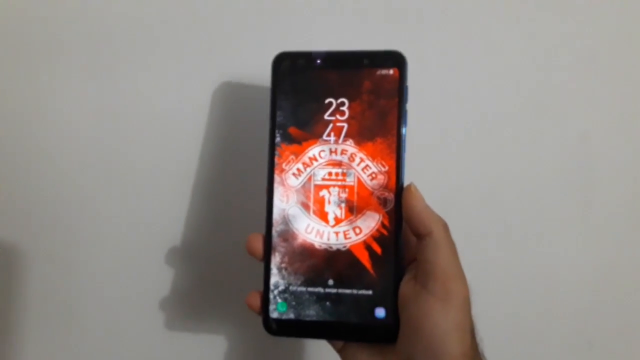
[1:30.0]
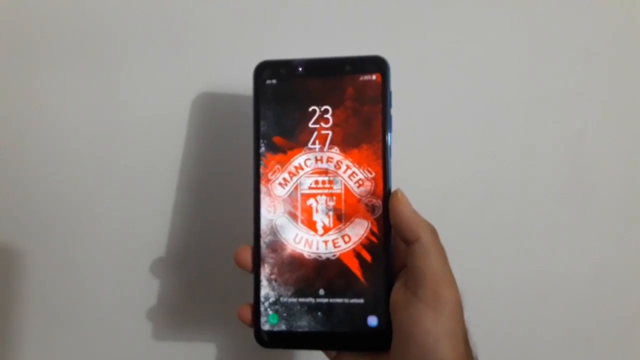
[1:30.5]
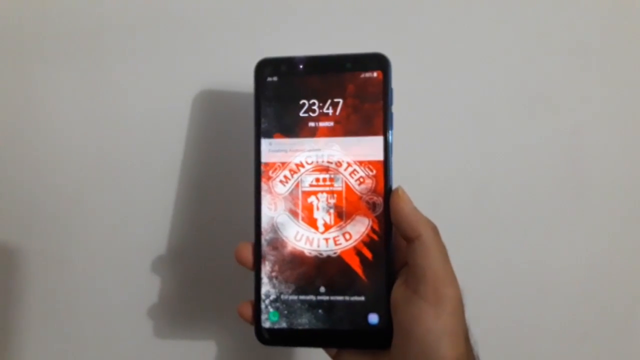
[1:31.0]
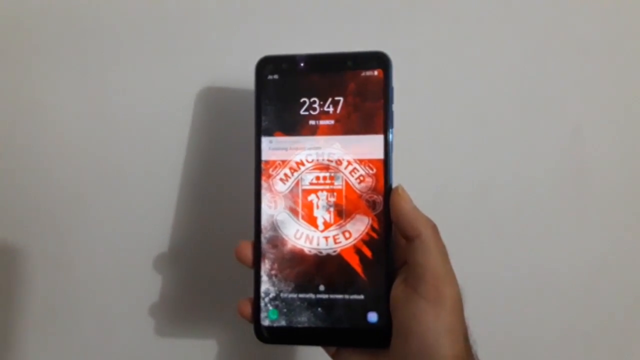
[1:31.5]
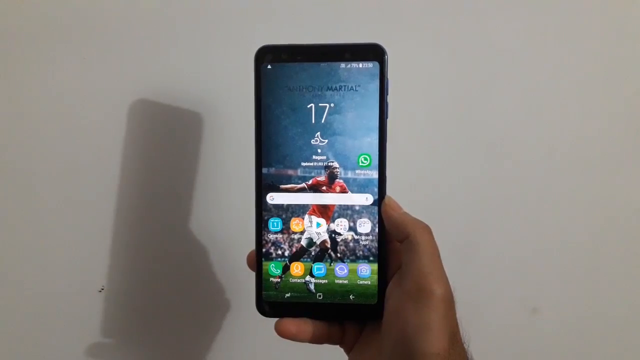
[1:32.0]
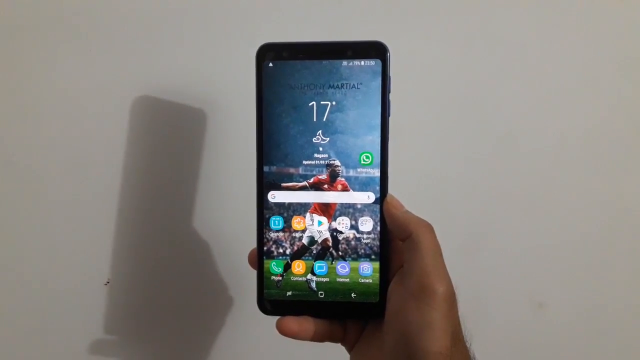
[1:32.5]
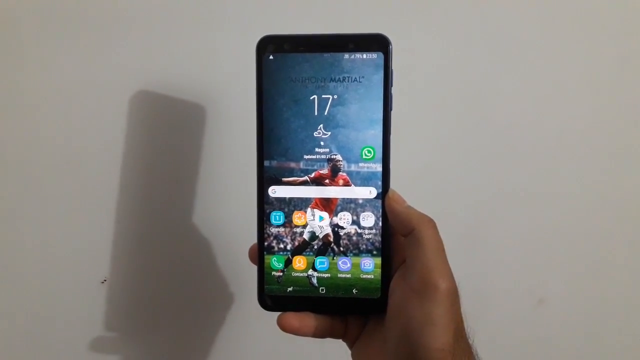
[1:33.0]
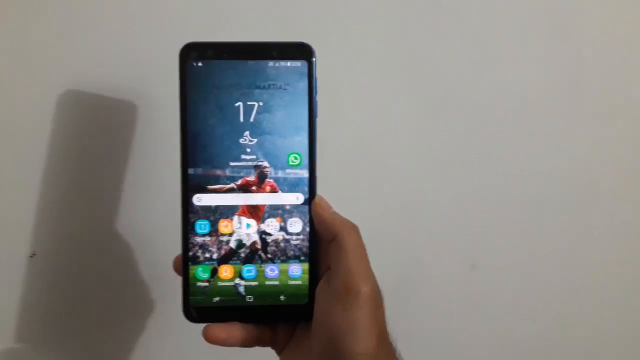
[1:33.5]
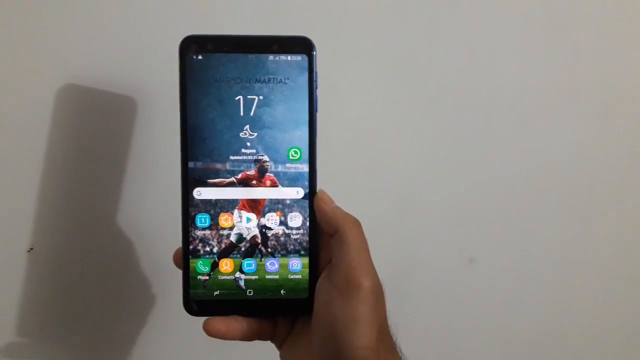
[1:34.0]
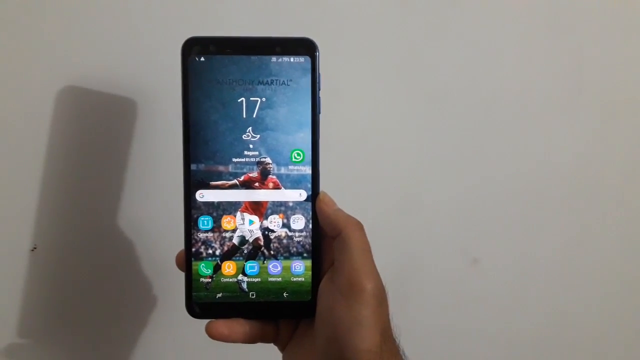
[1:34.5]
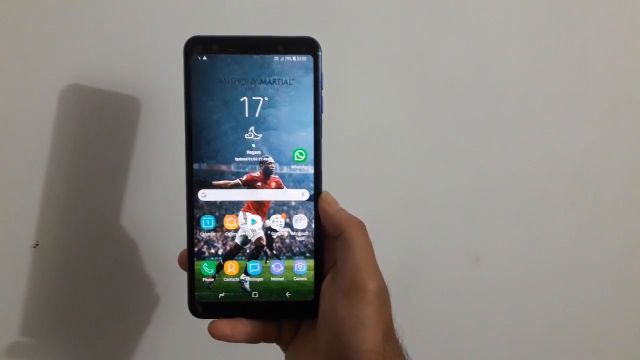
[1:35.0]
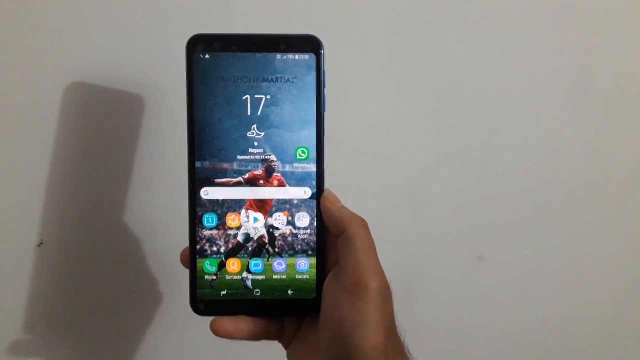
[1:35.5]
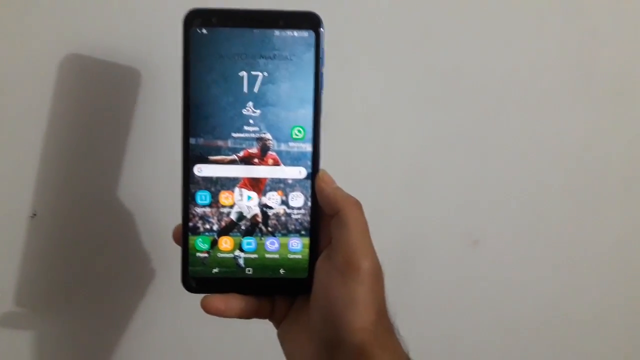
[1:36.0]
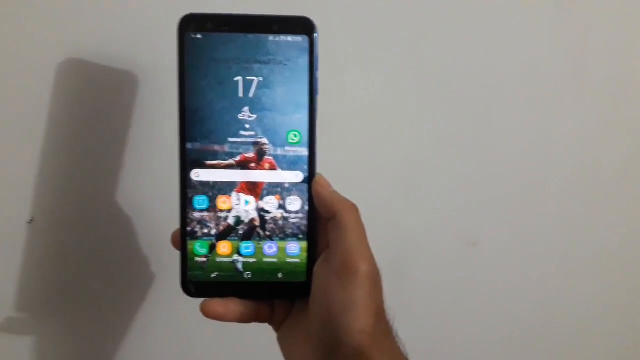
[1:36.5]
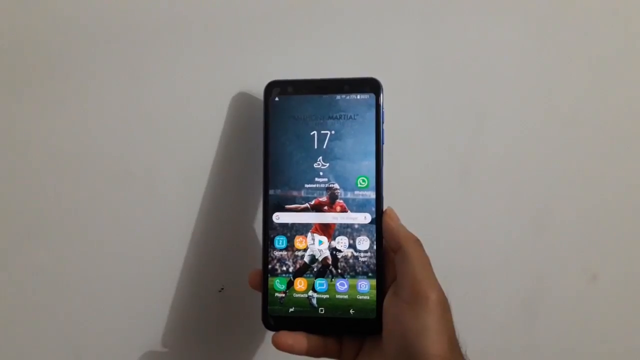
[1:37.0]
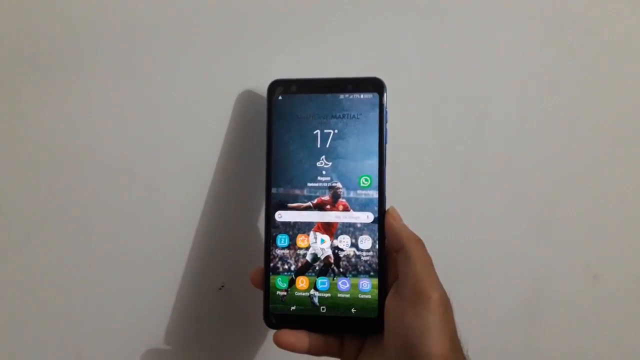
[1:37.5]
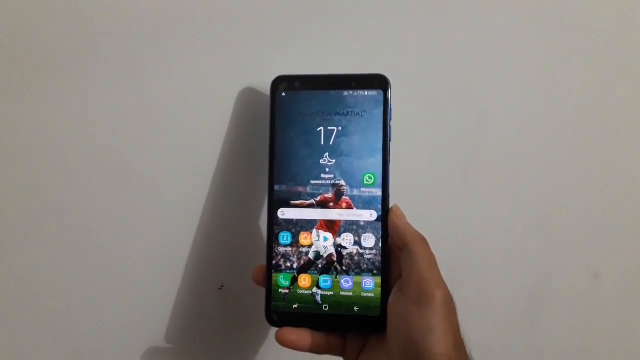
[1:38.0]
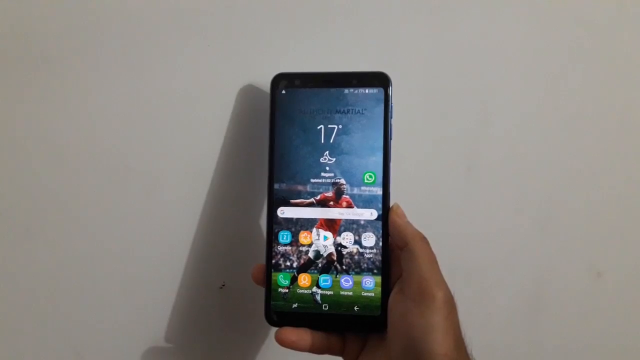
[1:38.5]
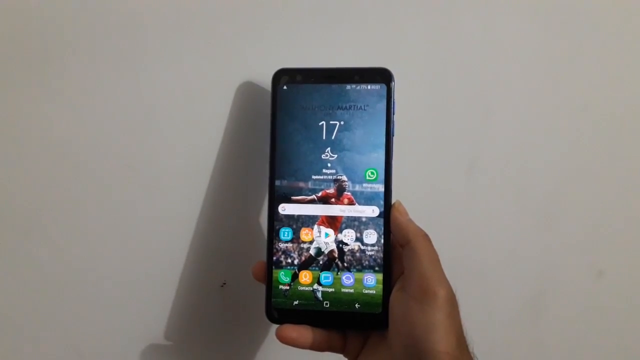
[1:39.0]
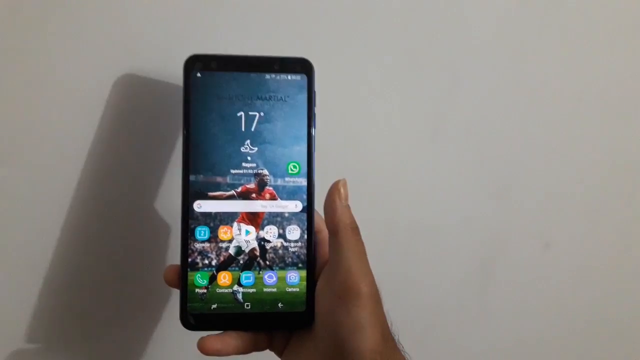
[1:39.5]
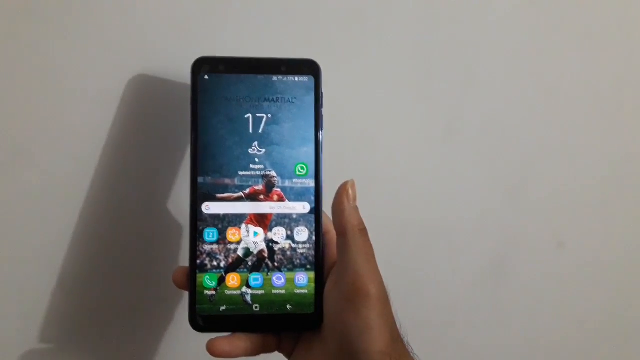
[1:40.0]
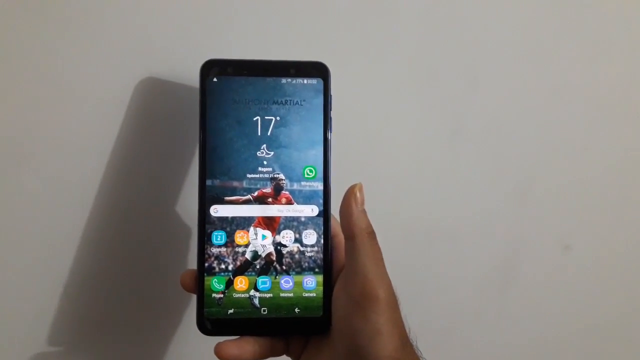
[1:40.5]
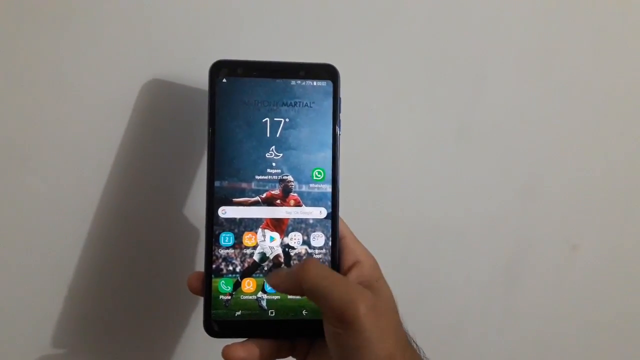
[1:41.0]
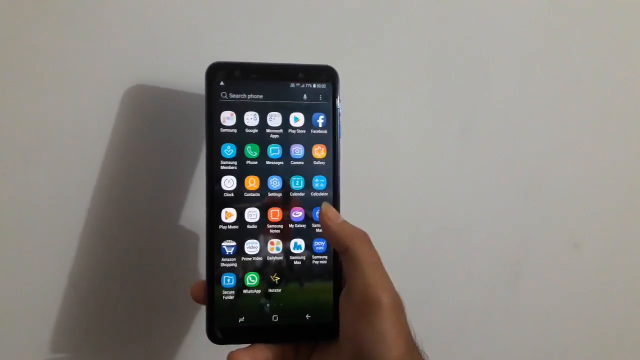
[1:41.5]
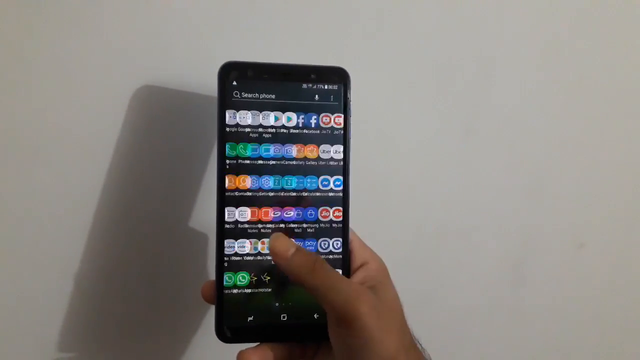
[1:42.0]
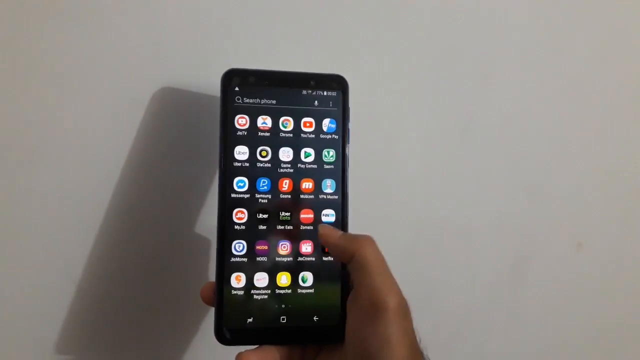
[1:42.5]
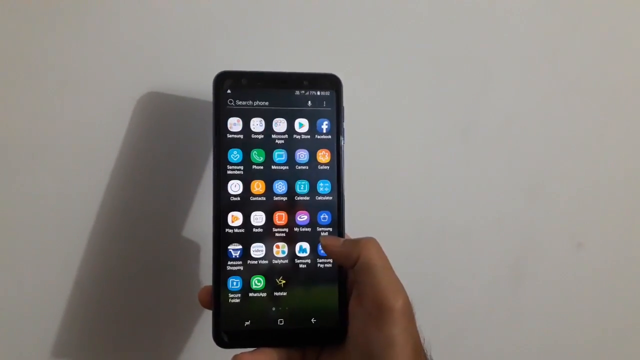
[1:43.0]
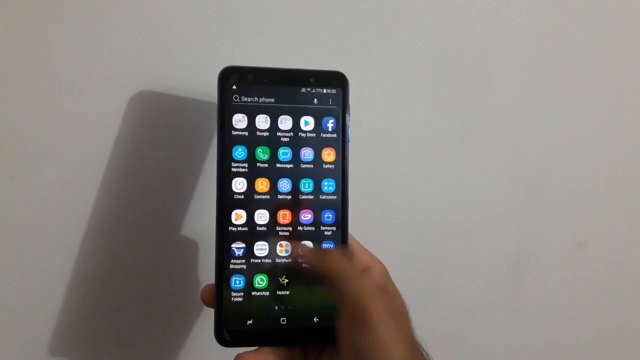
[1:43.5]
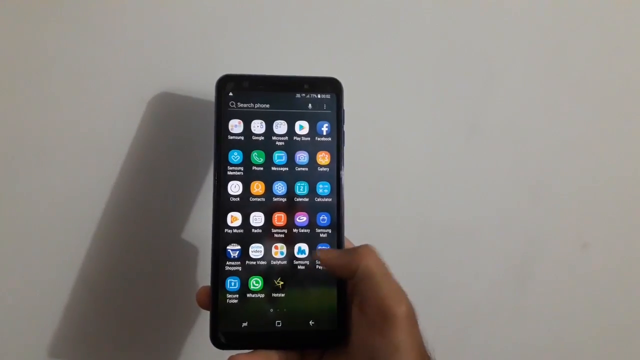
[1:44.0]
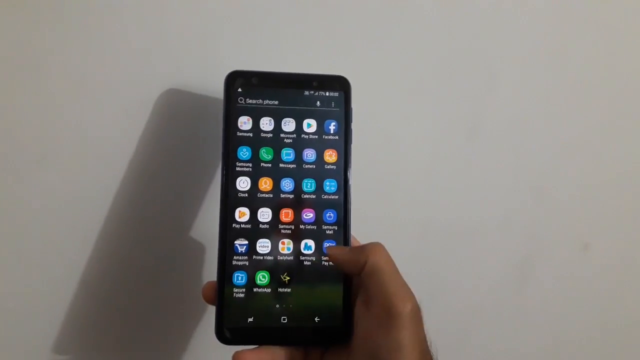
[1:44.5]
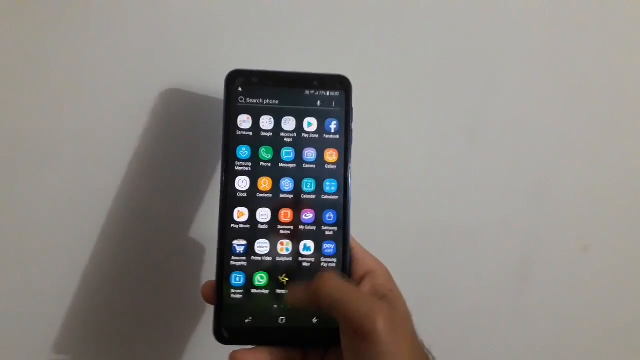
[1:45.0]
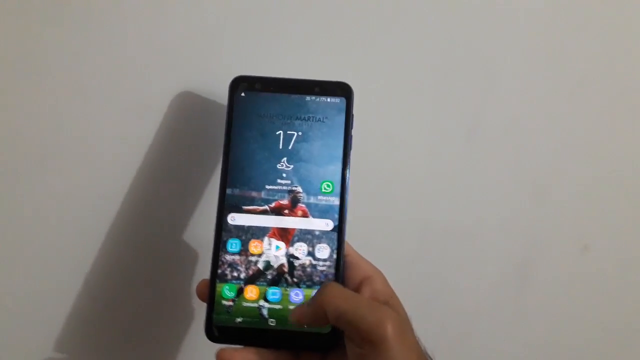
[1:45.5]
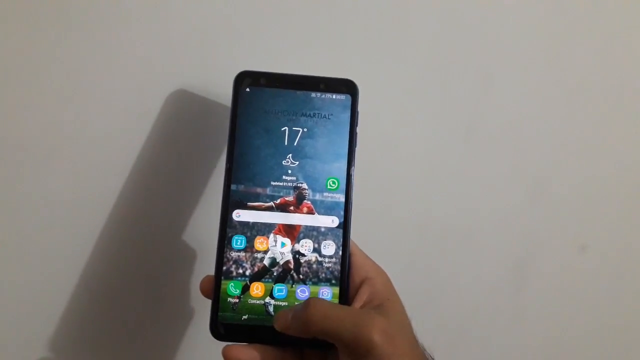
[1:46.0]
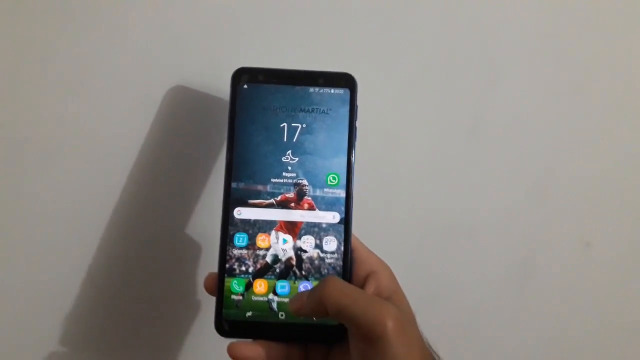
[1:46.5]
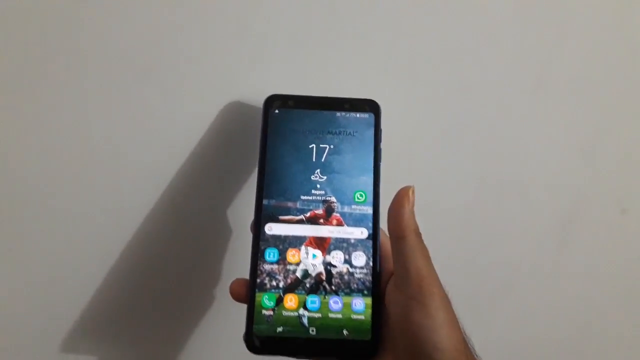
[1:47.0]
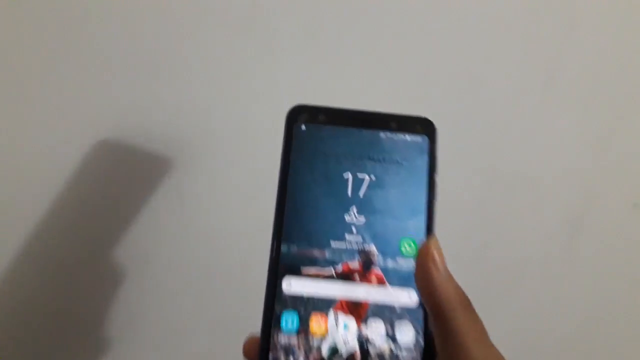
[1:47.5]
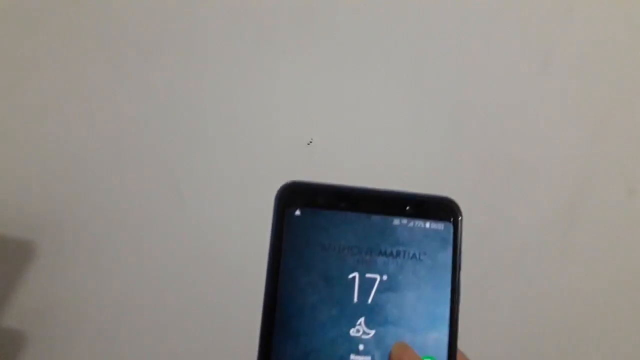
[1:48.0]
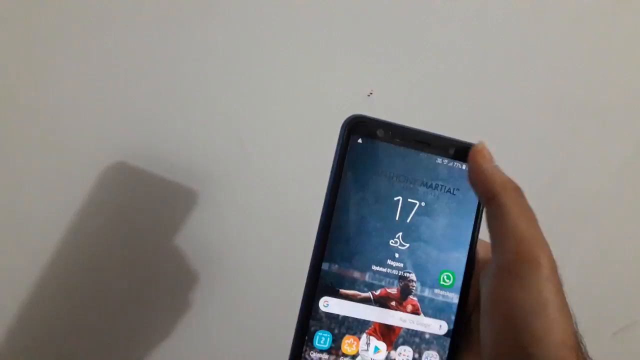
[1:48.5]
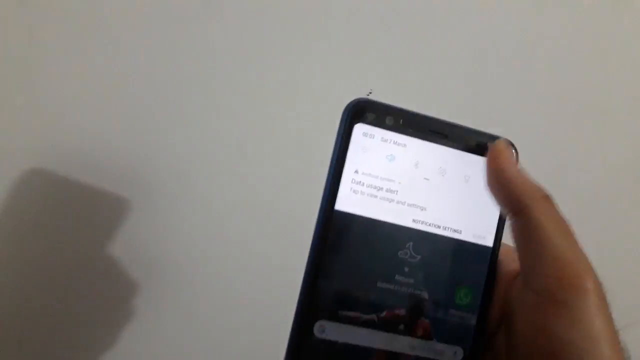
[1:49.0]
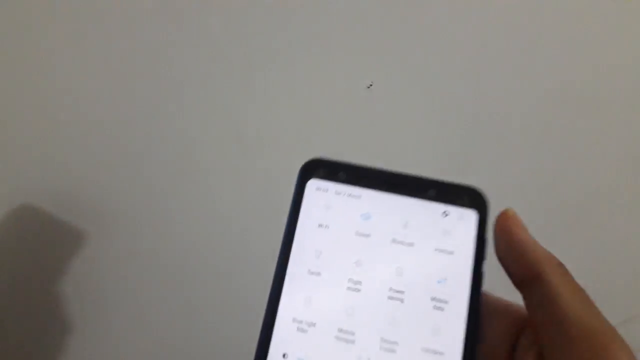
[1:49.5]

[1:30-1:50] A woman holds up a Samsung phone between her fingers and her right thumb. The time shows on the phone, along with "Manchester United" and the team's symbol. The phone casts a shadow on the wall showing its outline. When she changes the screen it says "17 degrees," with icons and apps, and a soccer player as her screensaver. She clicks on something with her thumb, a page of apps appears, and she scrolls that page to the right. She clicks on a photo app, and a soccer player in white shorts and a red top appears. The phone then goes to her Manchester United screensaver page.